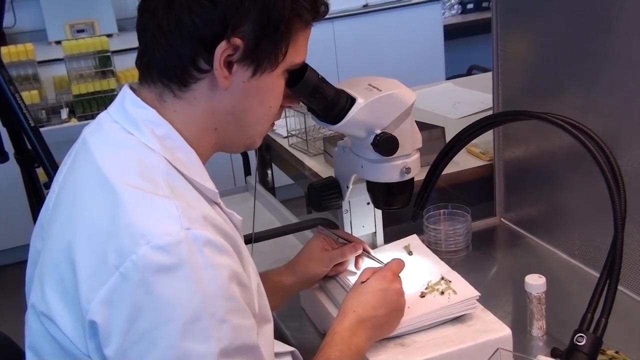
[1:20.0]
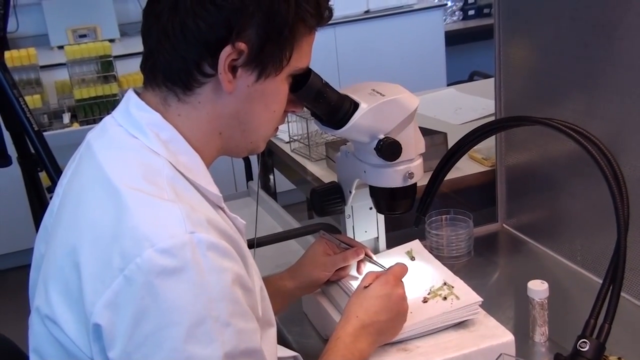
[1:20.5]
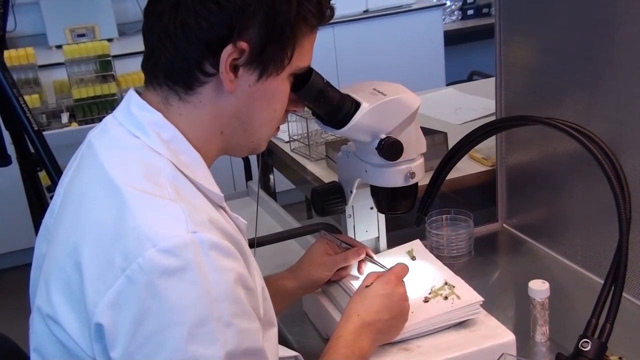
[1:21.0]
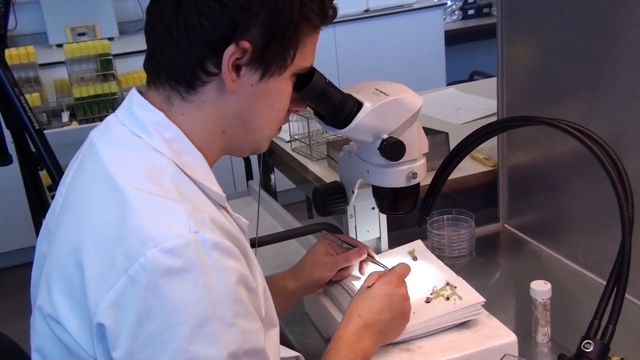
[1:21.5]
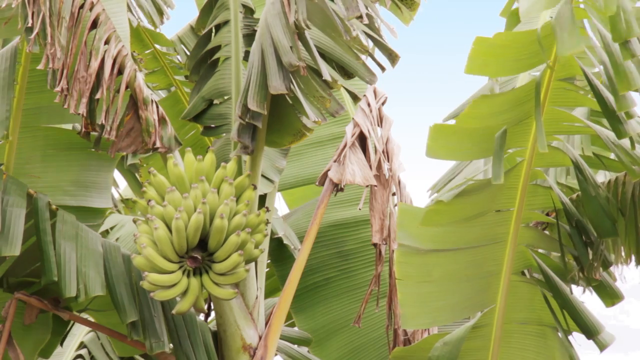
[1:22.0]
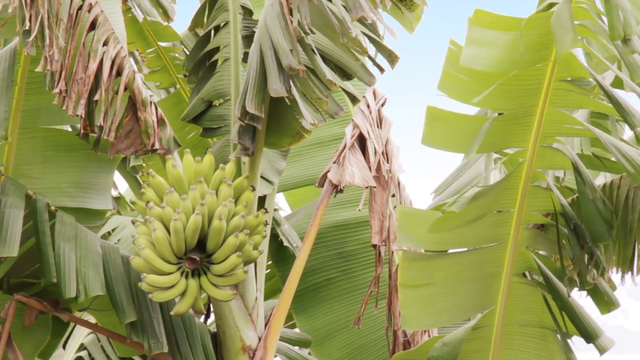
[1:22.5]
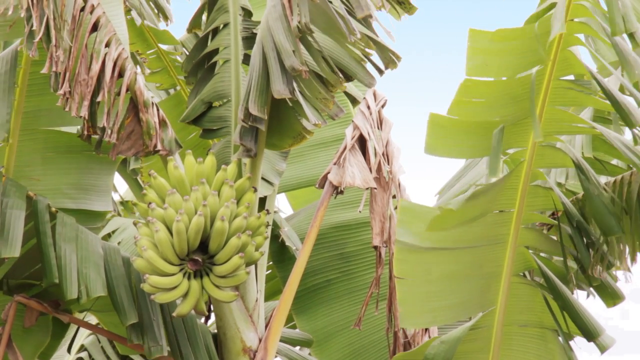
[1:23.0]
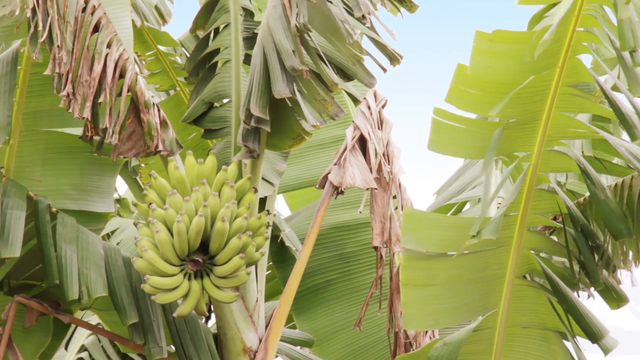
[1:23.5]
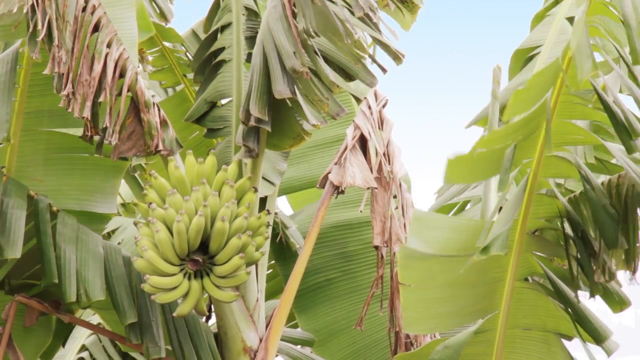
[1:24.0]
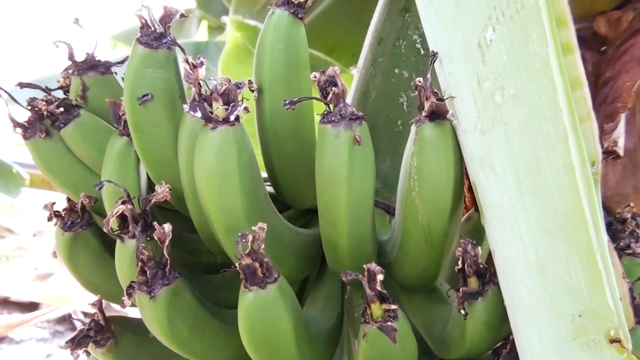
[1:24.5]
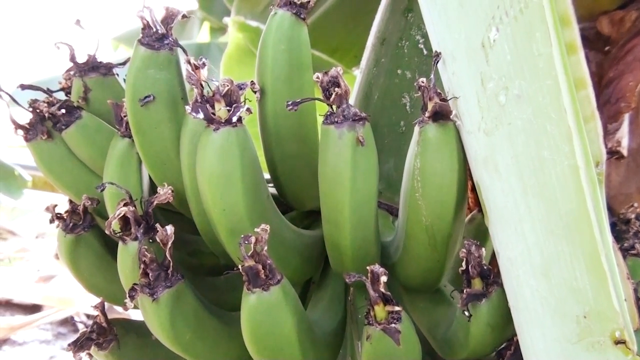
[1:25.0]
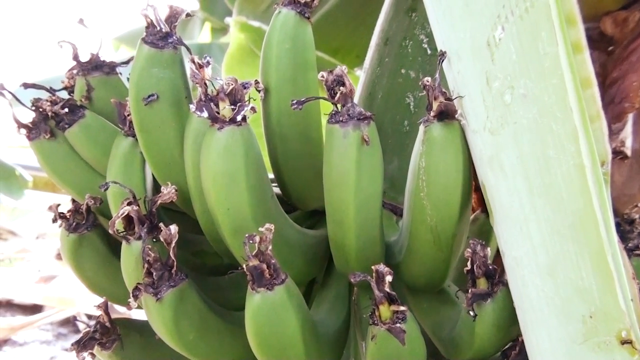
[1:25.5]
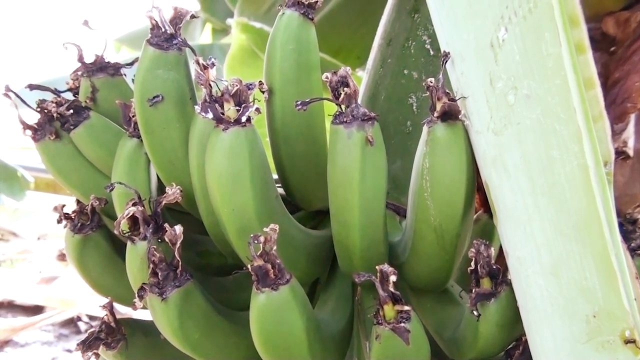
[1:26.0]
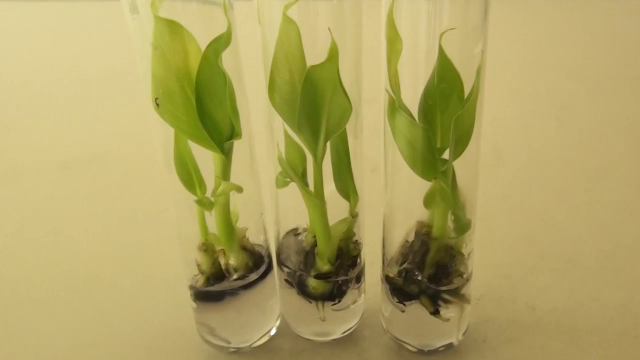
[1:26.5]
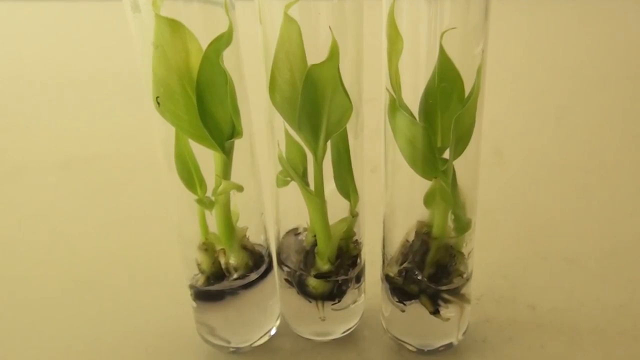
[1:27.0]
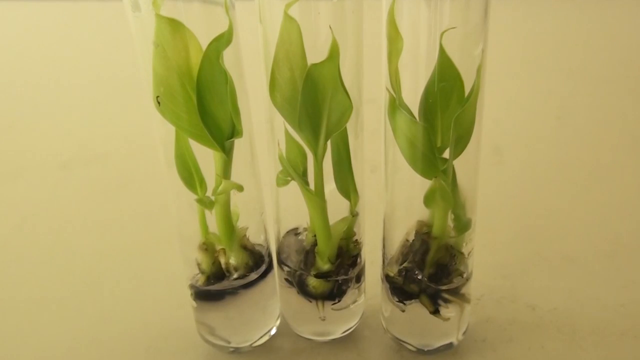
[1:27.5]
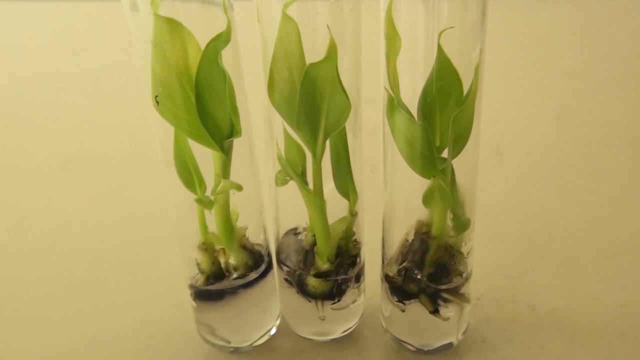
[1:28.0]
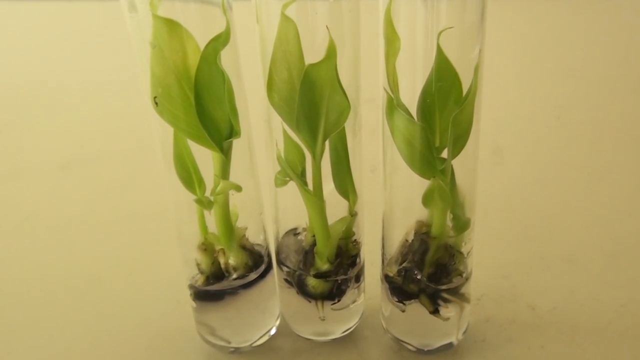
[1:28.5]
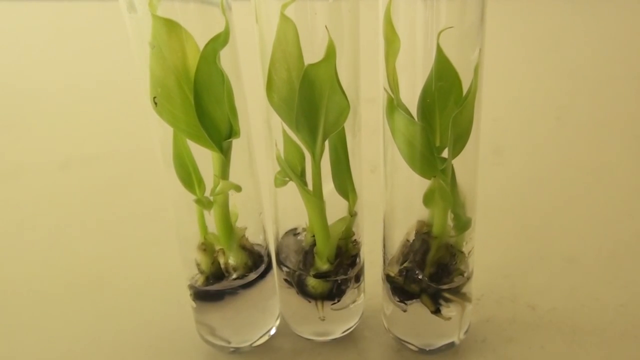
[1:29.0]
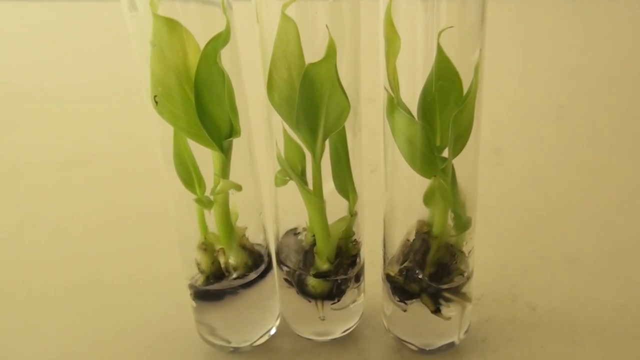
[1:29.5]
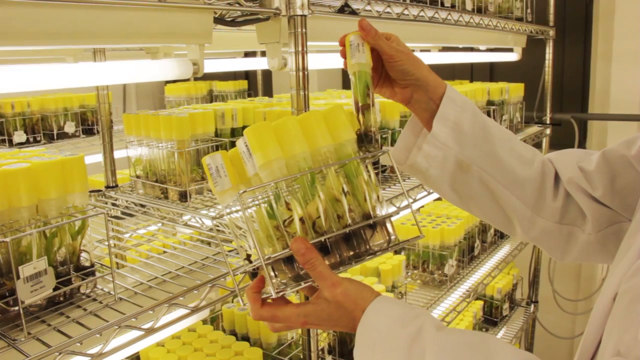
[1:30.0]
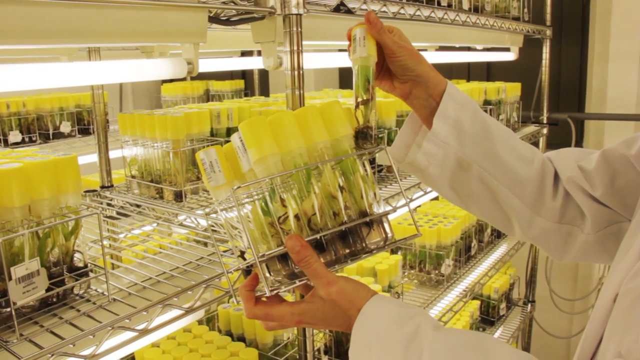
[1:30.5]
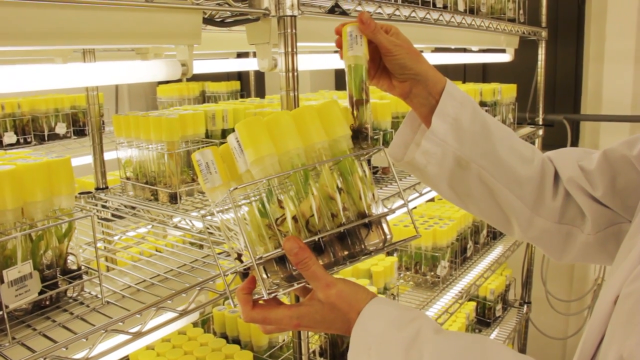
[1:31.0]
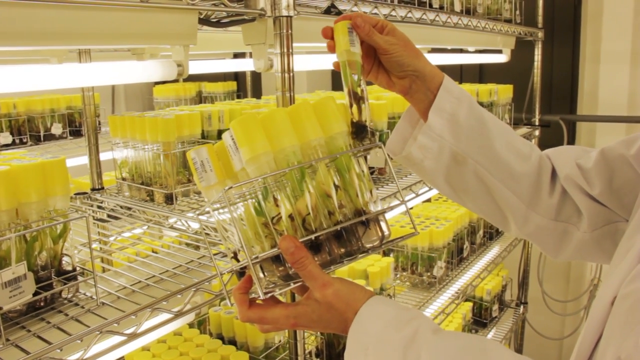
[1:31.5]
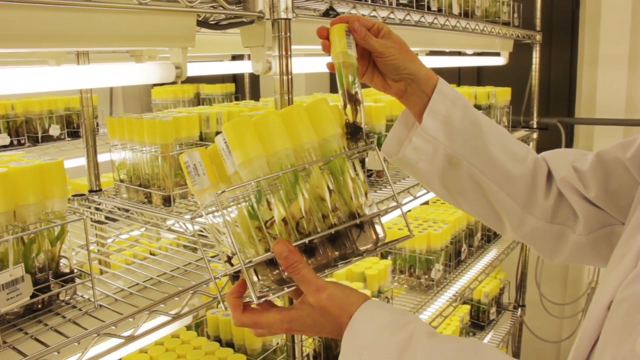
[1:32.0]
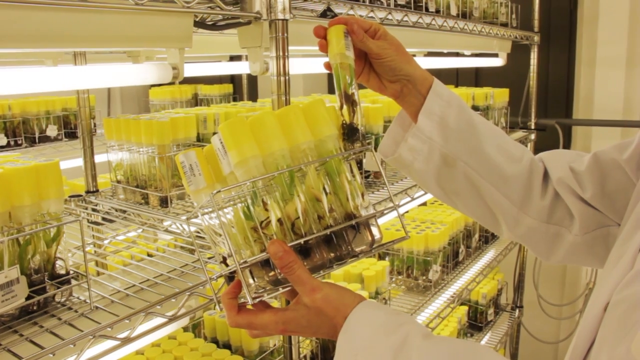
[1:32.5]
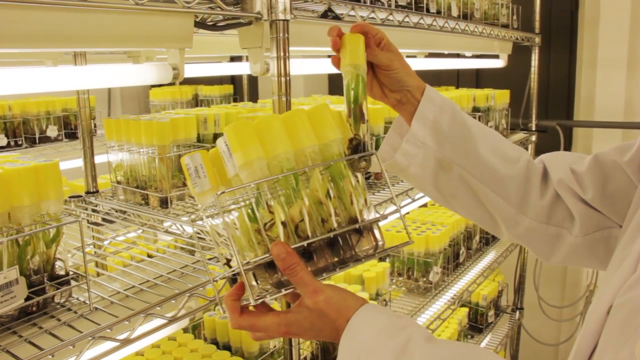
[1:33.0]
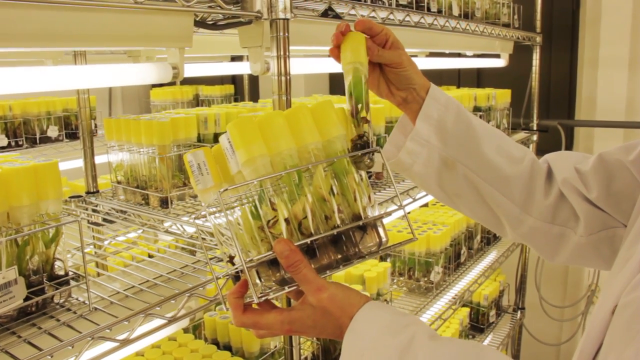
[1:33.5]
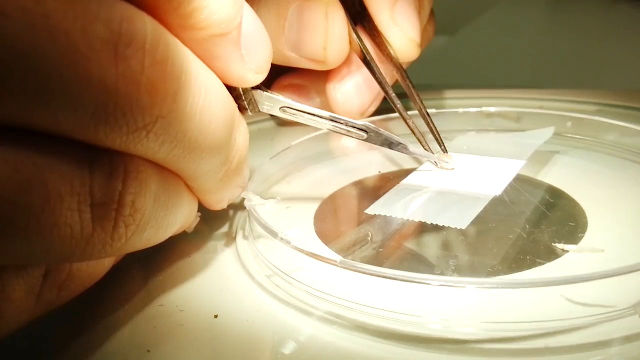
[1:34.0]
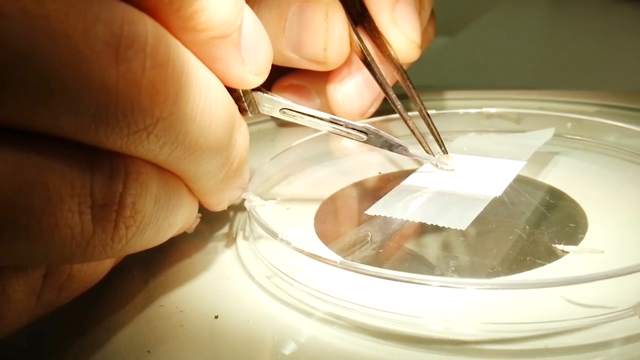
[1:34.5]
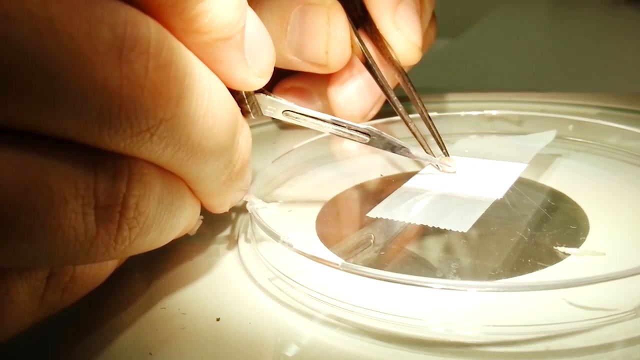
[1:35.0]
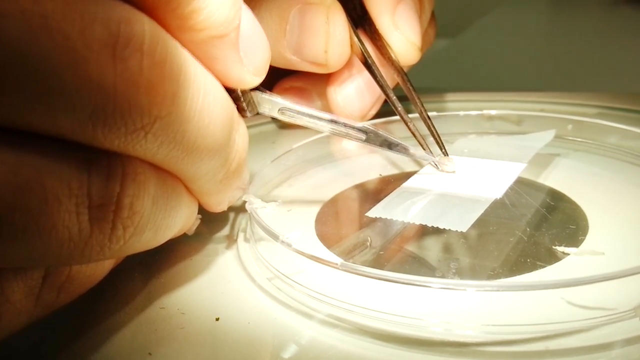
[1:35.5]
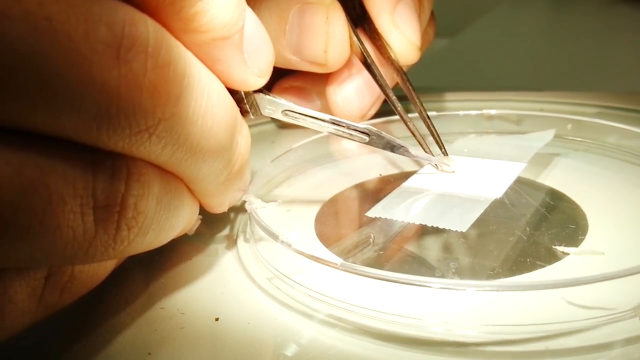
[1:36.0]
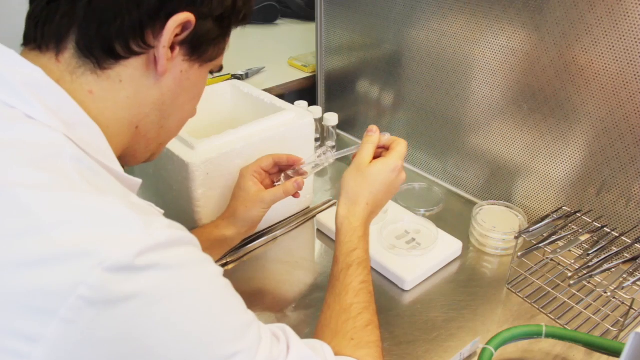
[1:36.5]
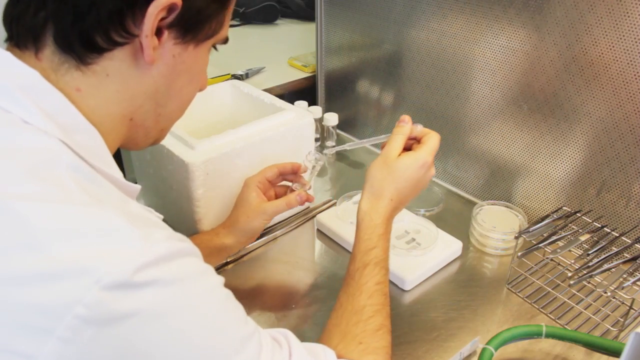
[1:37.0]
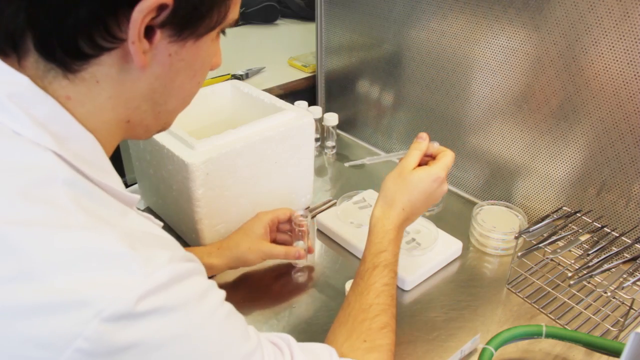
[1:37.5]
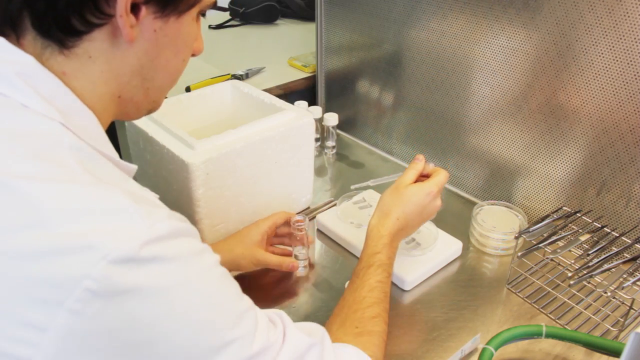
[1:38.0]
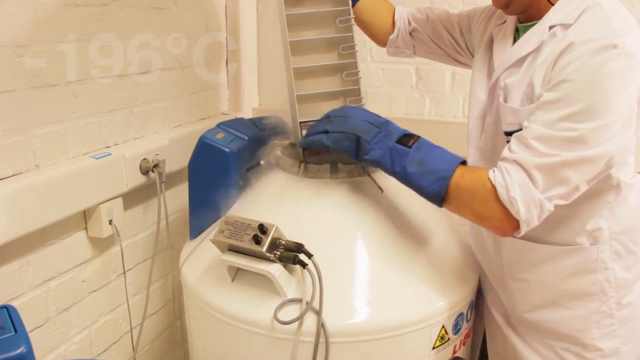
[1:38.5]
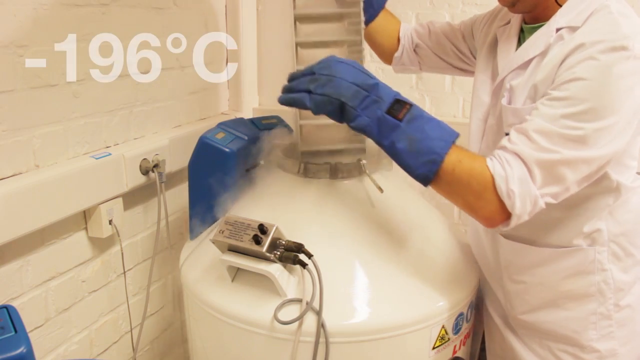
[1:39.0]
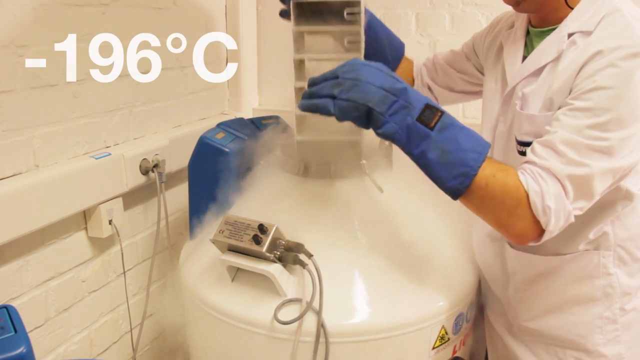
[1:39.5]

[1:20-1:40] A male scientist in a white lab coat sits at a microscope that is turned on, with light shining down below it, and looks into it at something; yellow vials are visible in the background. The scene changes to the outdoors, showing green plants, leaves and banana bunches, with some of the bananas on the ends growing what look like purple leaves or flowers. Next, three clear, see-through vials have plants growing inside them, just the start of the seed and a green sprout. The woman scientist in the white lab coat holds the metal tray of yellow vials and looks at one of the vials. A close-up then shows a person using tweezers under a microscope light to view something, apparently in a lab.